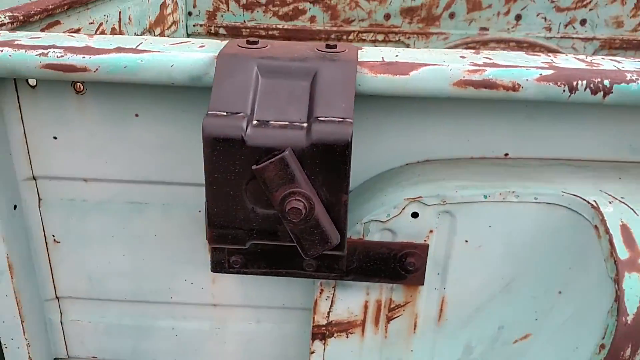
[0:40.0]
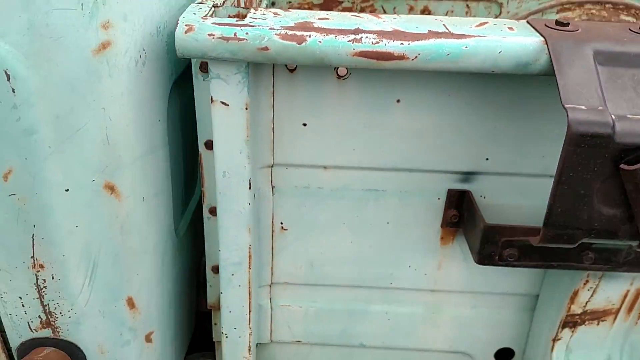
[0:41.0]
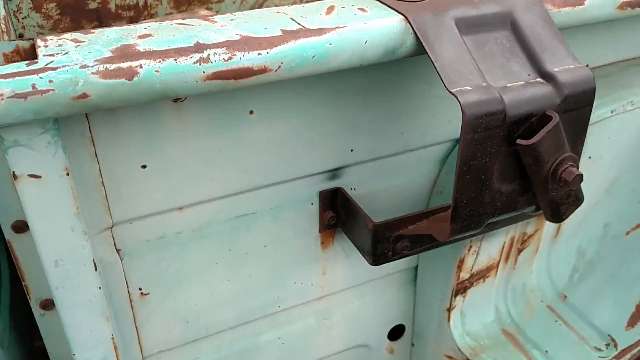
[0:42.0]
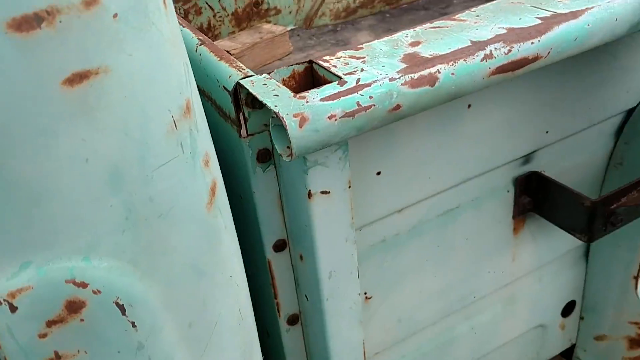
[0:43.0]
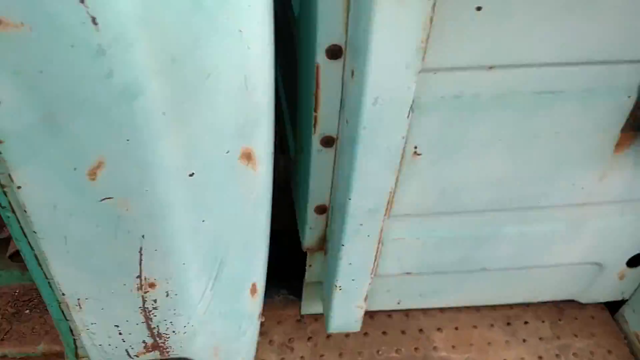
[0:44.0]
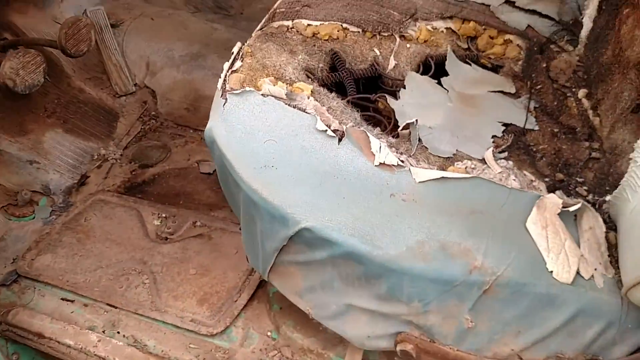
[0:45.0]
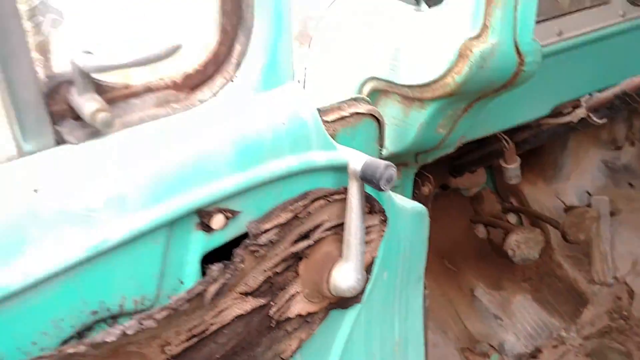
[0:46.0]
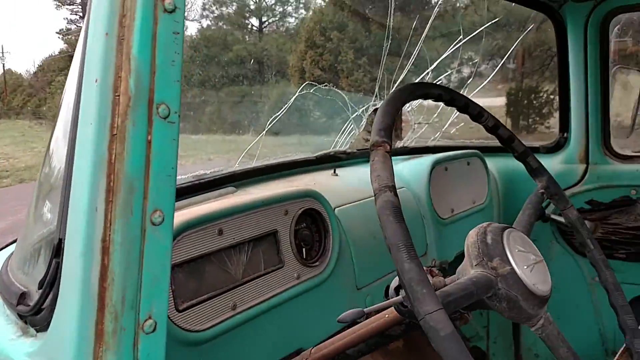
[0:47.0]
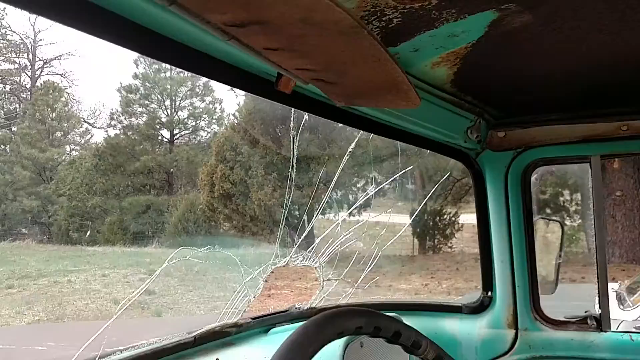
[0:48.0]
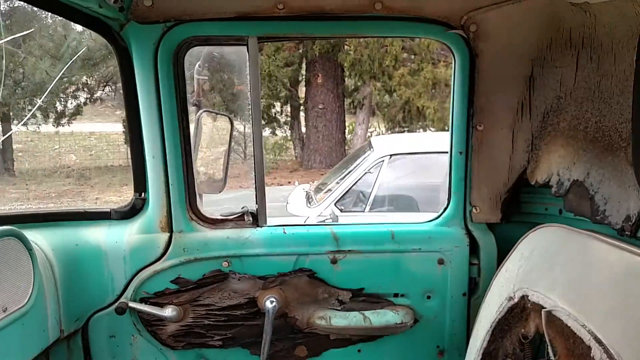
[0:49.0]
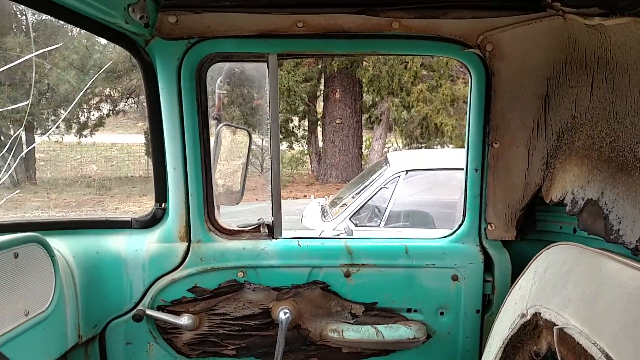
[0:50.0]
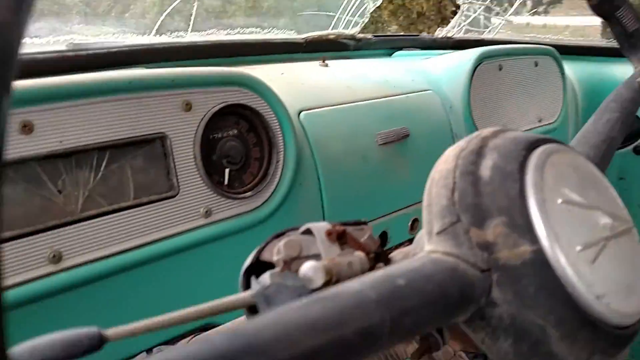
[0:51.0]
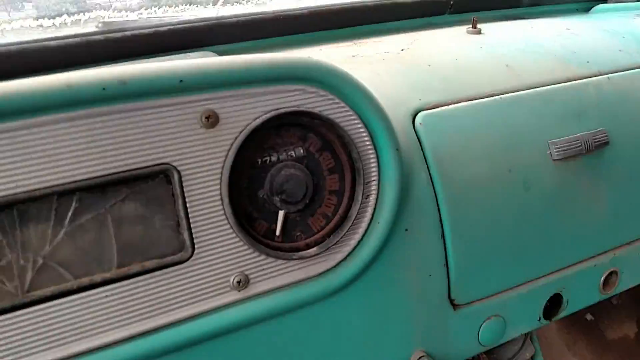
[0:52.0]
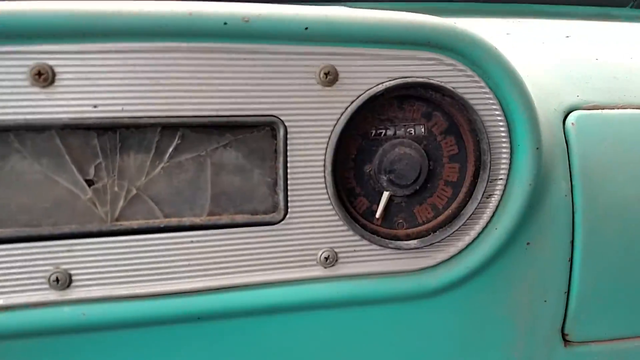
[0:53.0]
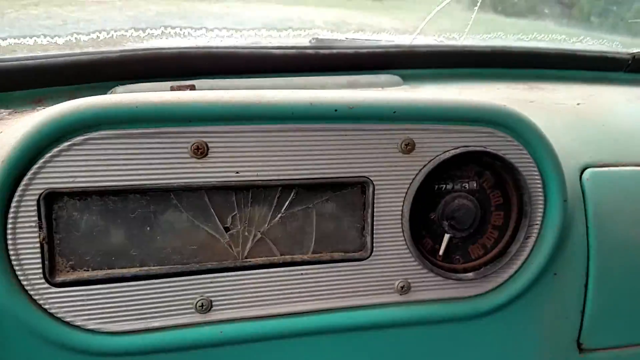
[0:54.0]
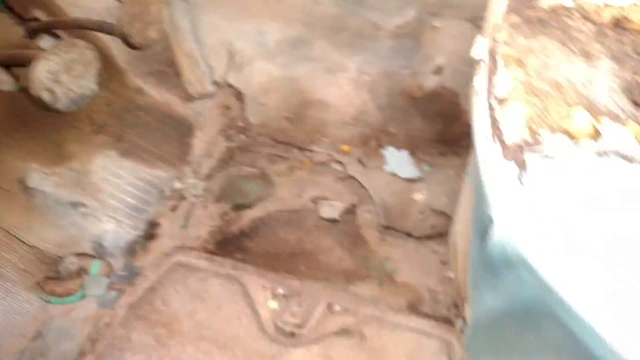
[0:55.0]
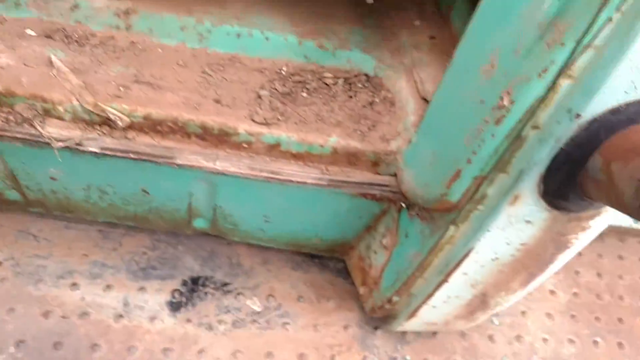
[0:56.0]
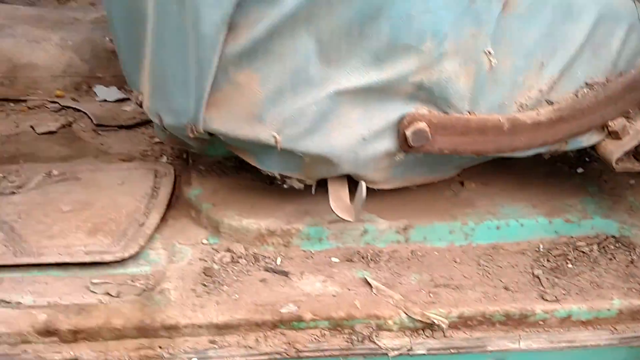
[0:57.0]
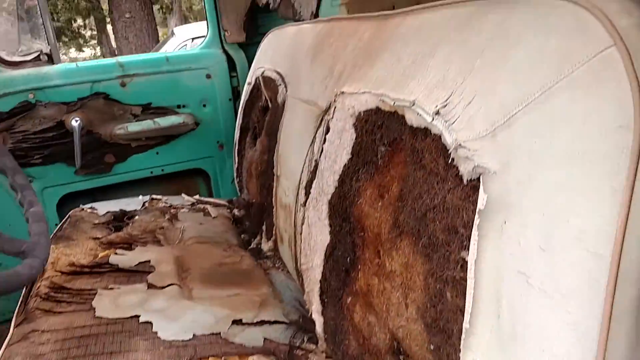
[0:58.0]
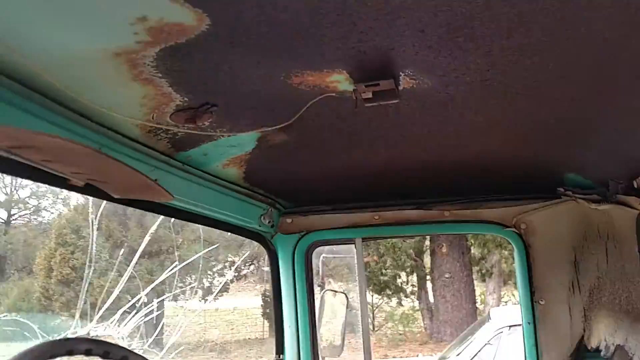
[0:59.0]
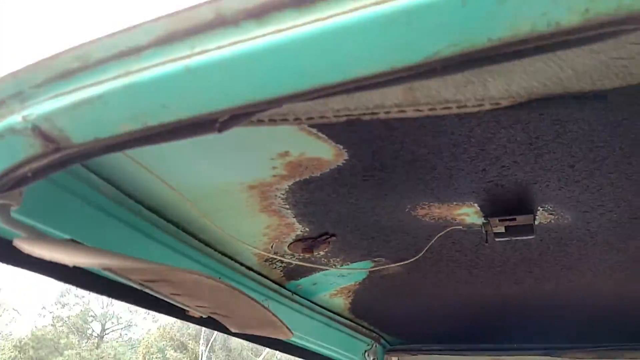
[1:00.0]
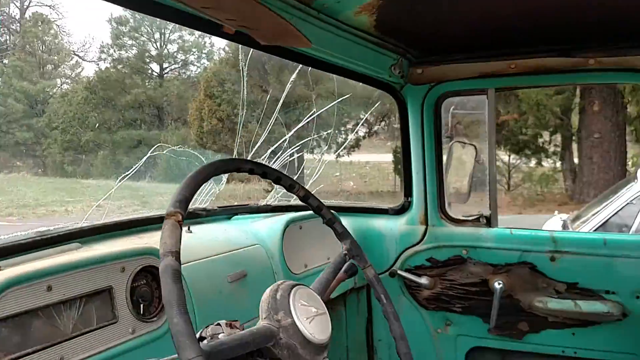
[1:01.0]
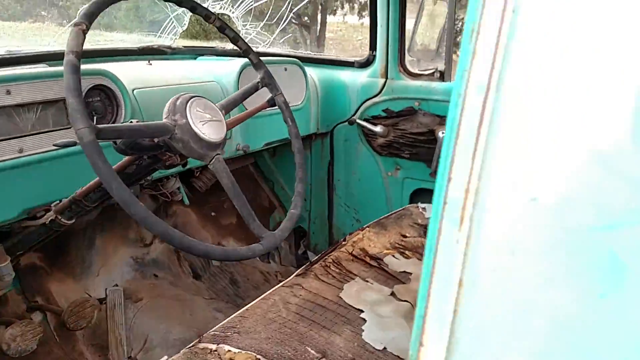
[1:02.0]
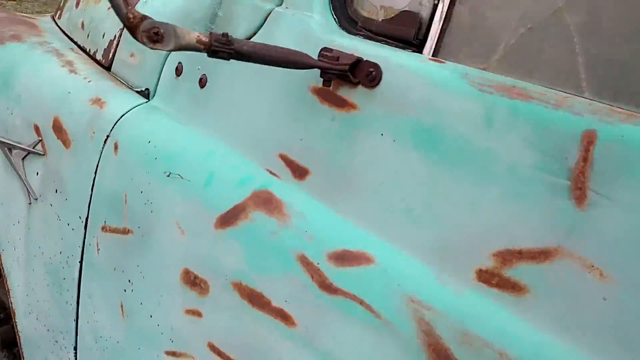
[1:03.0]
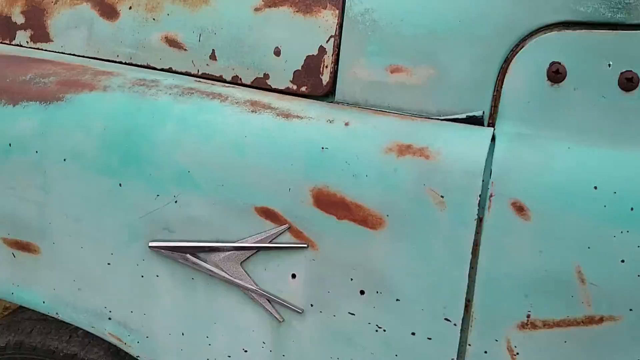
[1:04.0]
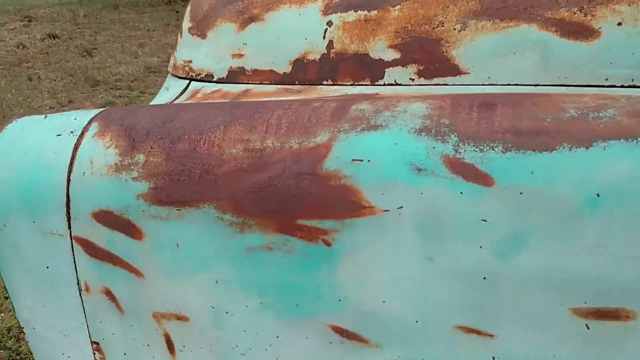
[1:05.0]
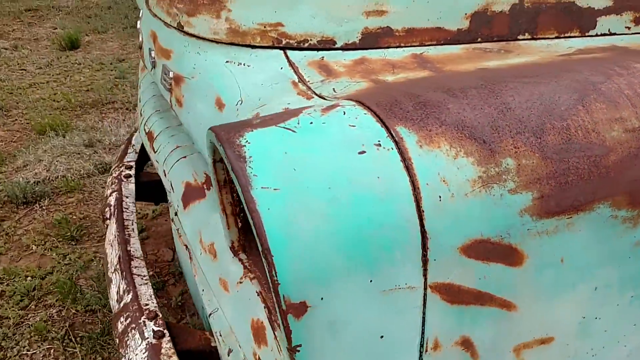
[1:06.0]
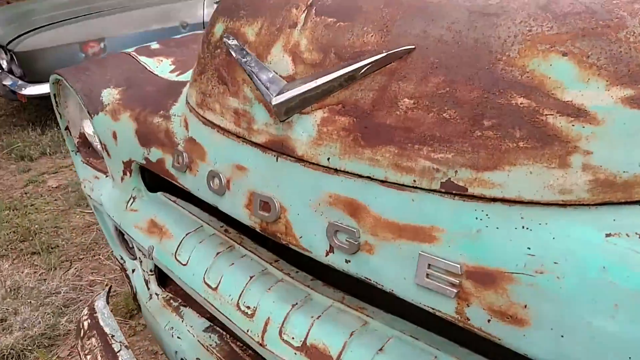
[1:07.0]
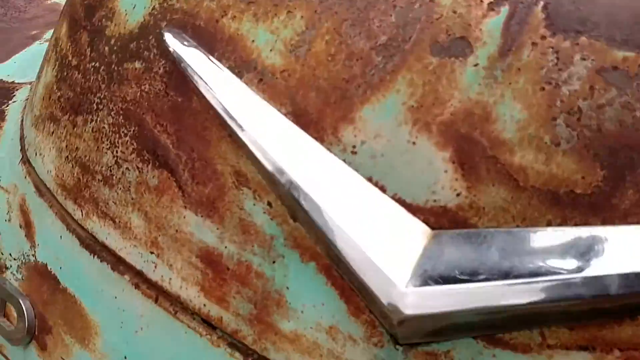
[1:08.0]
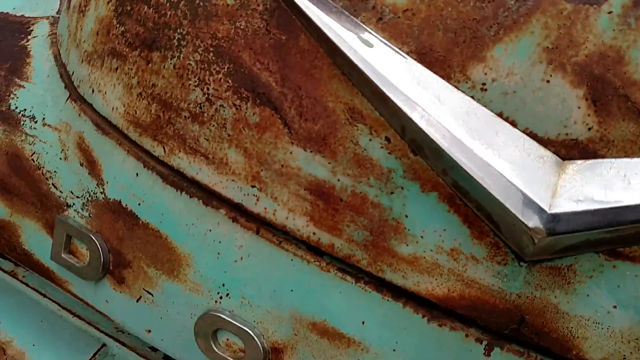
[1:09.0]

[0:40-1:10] The camera looks at the bed of a Dodge pickup truck from the back side. A black clamp is bolted onto the left side of the bed, and it seems to have some sort of handle in its center that can be twisted. The camera moves away, very shakily, over to the driver's side door. The door is open, and the camera goes inside: the front window is cracked and smashed with a hole in it, the window on the passenger side is open, and the interior is very torn up and old. The camera looks at the gauges and the speedometer; the gauge reader in the center of the dash area is broken and cracked. The bottom of the interior looks very burnt up and disassembled, and the seats look very burnt up, damaged and ripped apart. On the ceiling there is some kind of black device with a wire attached to it. The camera leaves, the driver's side door is closed, and the camera continues along the side of the truck to the front, where it focuses on a silver triangular-looking logo, then looks at the Dodge logo and zooms up.